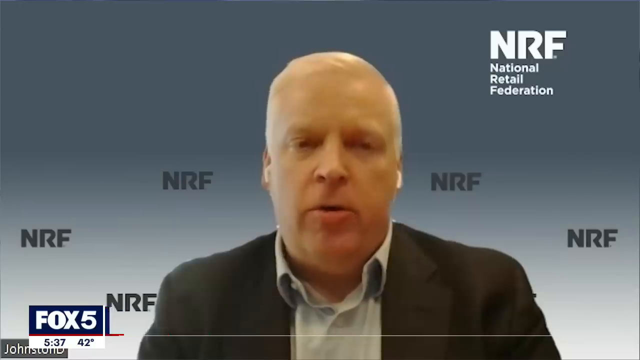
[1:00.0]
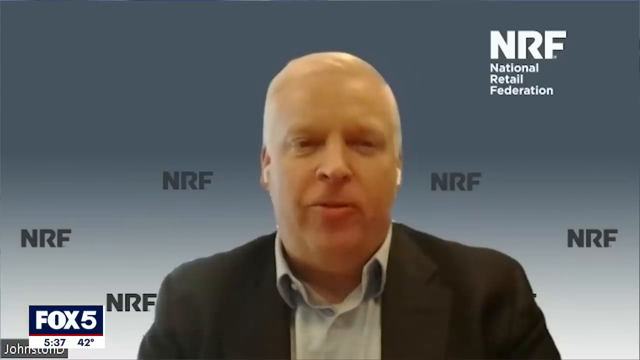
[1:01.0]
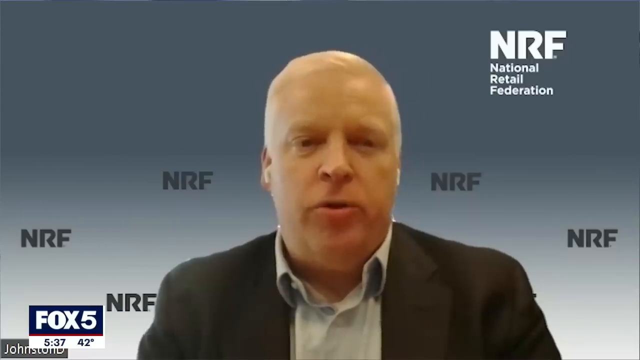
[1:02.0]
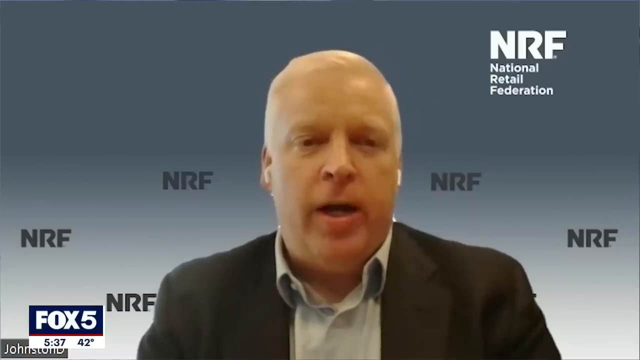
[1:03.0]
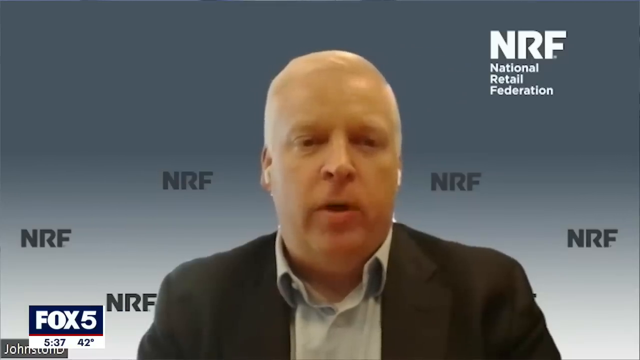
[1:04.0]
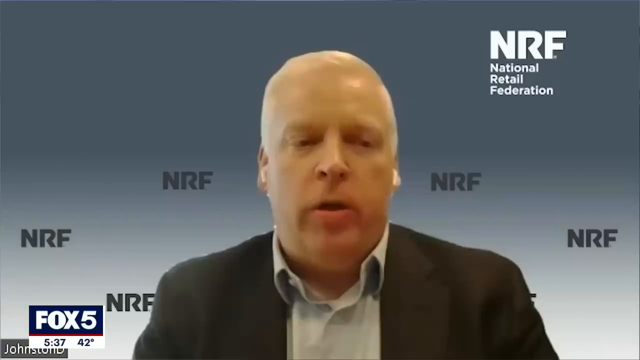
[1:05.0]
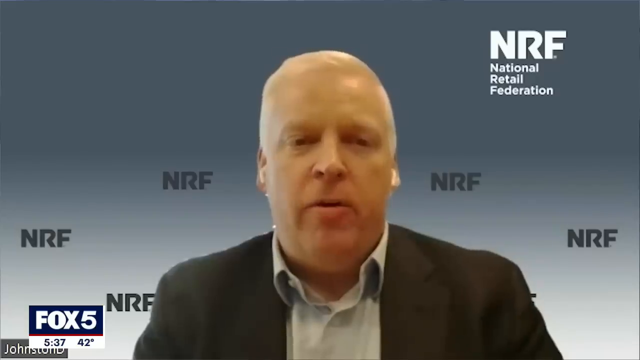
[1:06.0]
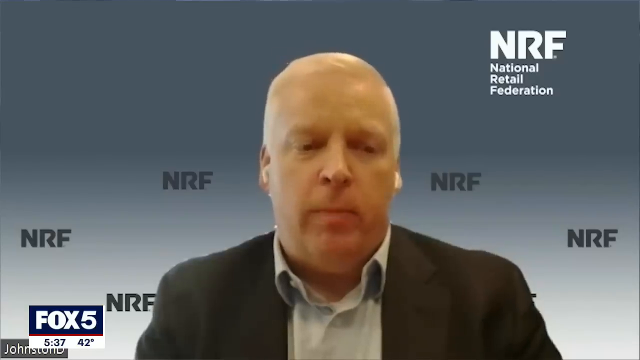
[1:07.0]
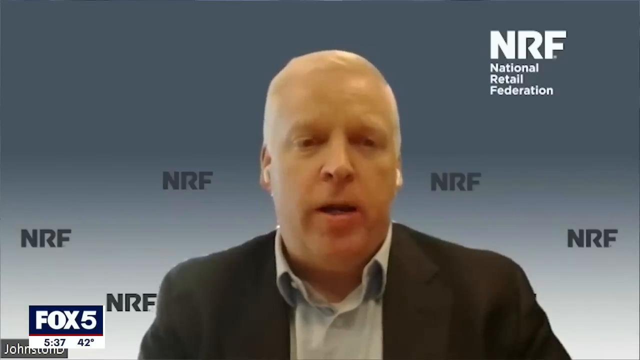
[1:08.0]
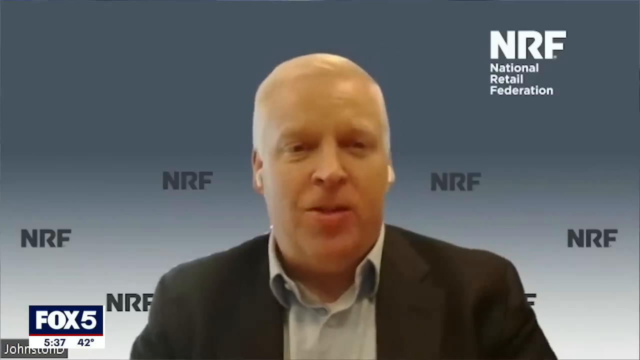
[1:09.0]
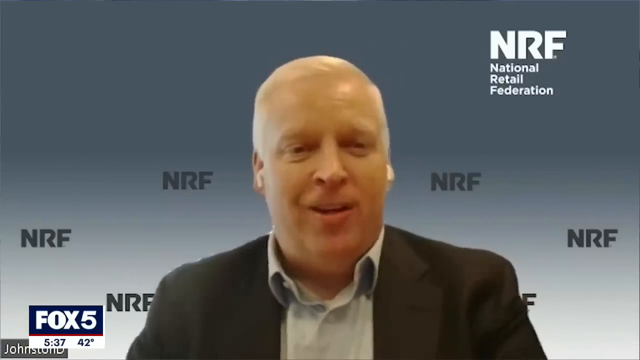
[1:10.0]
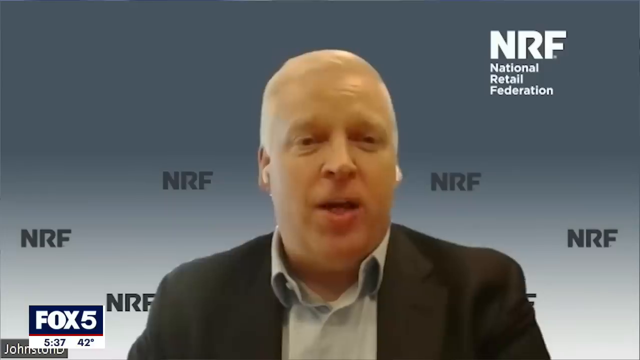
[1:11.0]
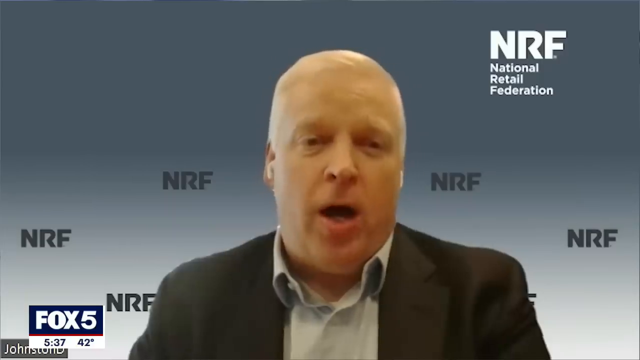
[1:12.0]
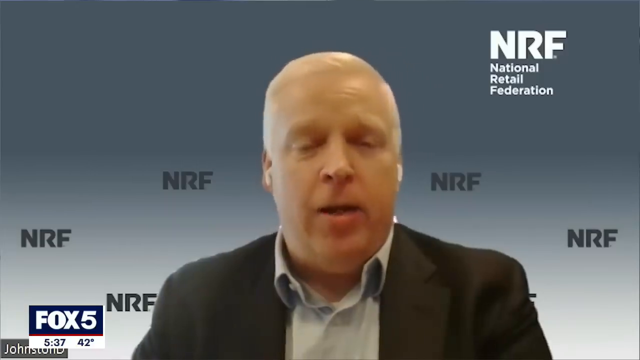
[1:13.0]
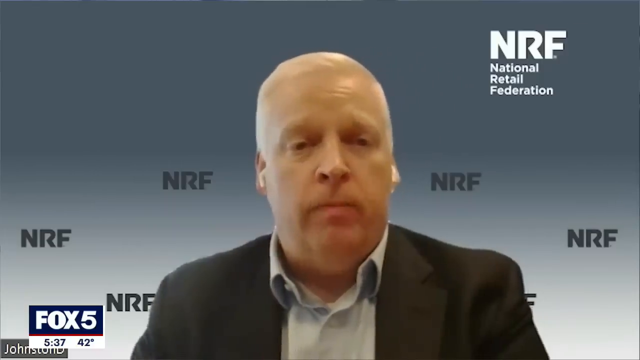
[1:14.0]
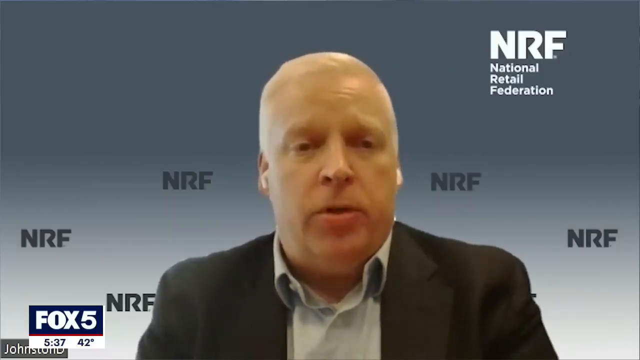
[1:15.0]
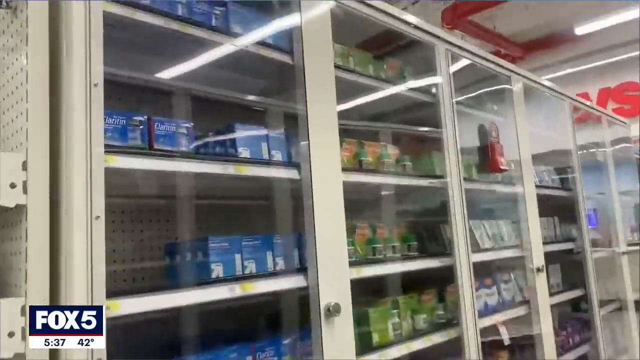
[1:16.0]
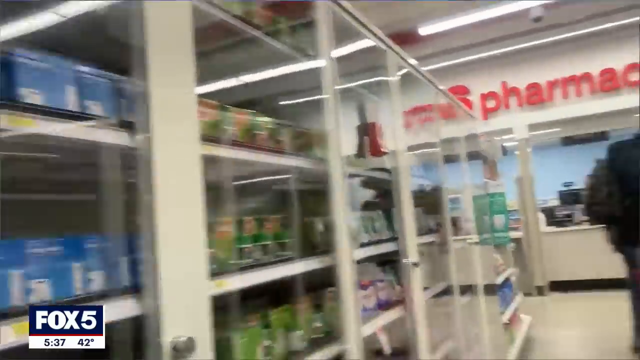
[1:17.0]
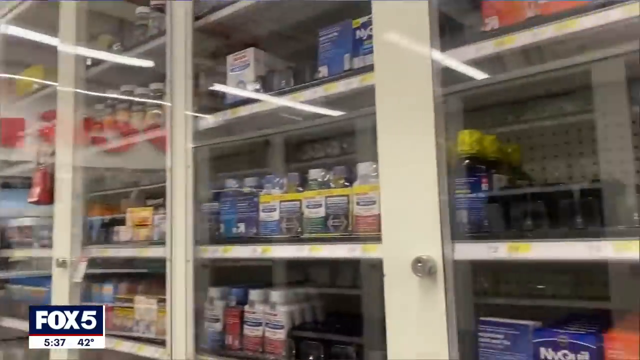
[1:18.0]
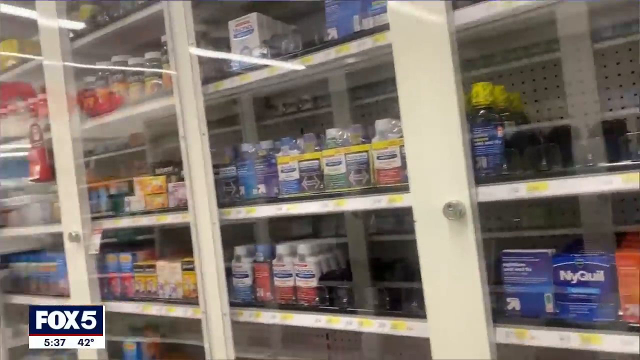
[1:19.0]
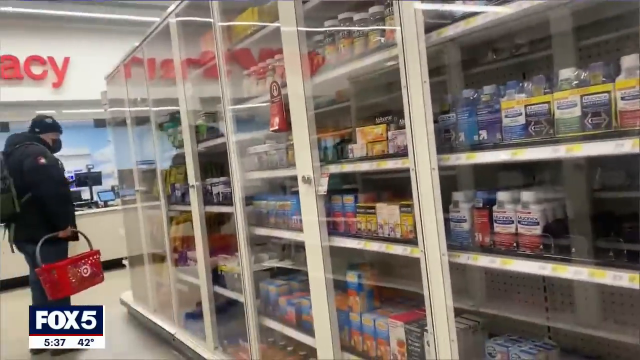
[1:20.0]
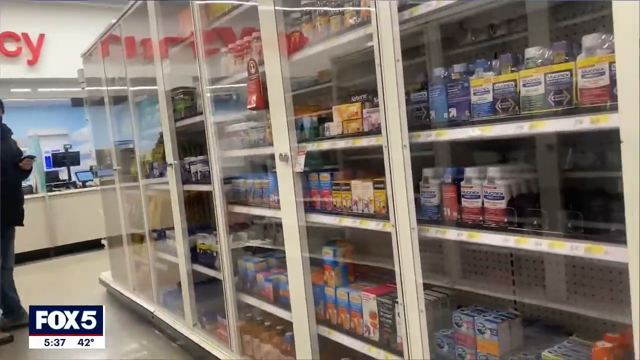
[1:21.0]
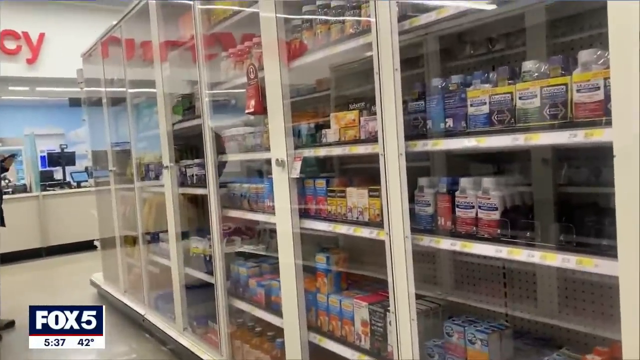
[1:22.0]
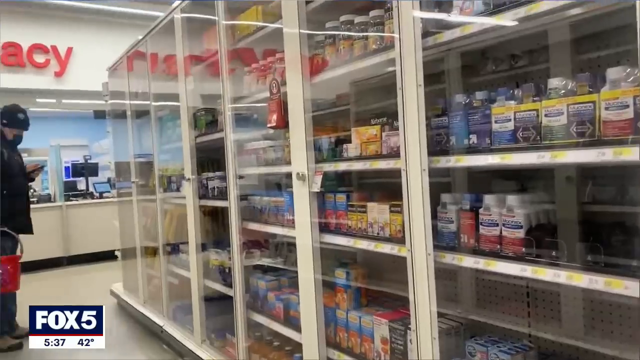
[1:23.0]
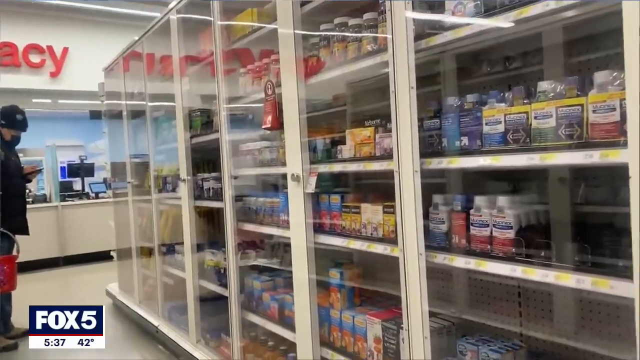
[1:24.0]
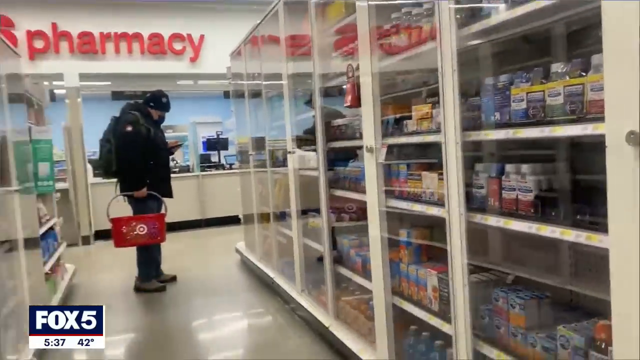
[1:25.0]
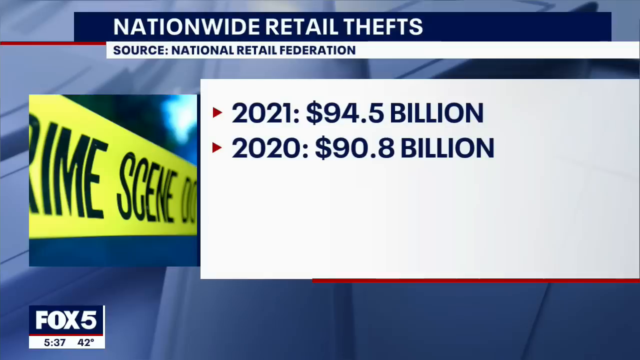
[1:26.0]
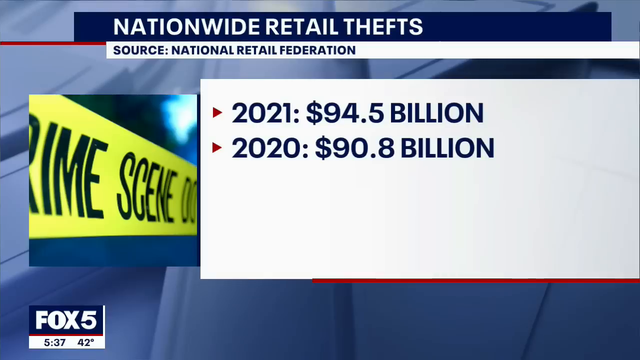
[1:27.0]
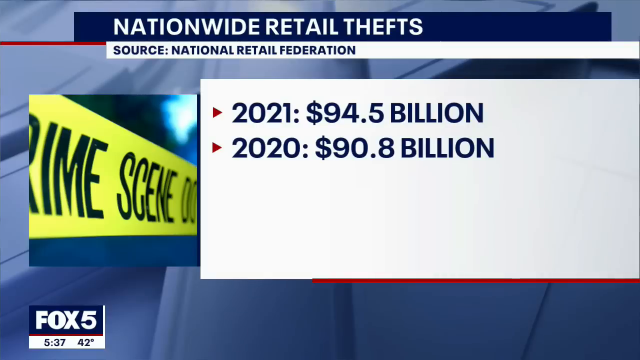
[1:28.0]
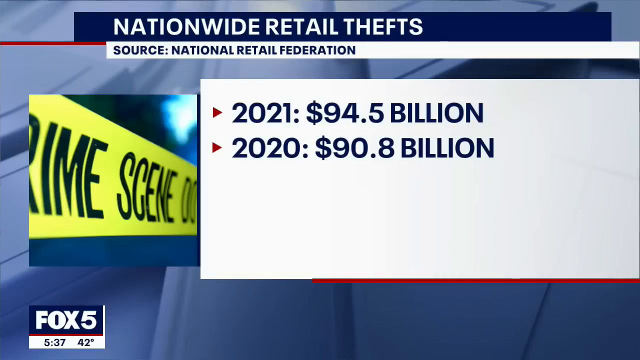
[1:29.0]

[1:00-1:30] A gray-haired white man in a dark suit jacket and collared shirt speaks directly into the camera in front of a plain background with several NRF logos, for National Retail Federation. The Fox 5 News logo is in the lower left corner, along with the time, 5:37, and 42 degrees. After he speaks for several seconds, the inside of a Target store is shown. The camera shows various items for purchase on the shelves, all of which appear to be locked up, including medicines and other items in the pharmacy section. At the very end, a nationwide retail thefts graphic appears, stating $94.5 billion for 2021 and $90.8 billion for 2020.